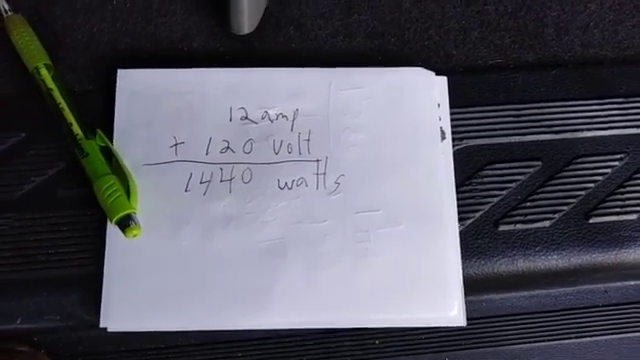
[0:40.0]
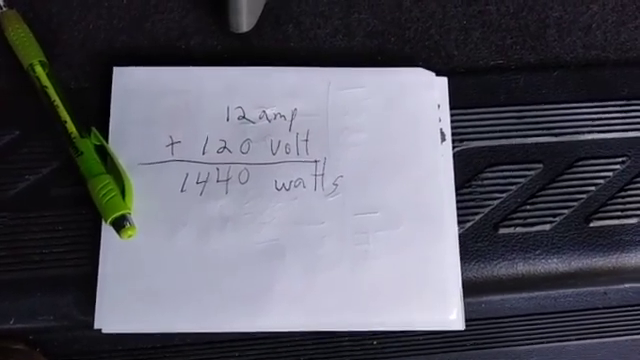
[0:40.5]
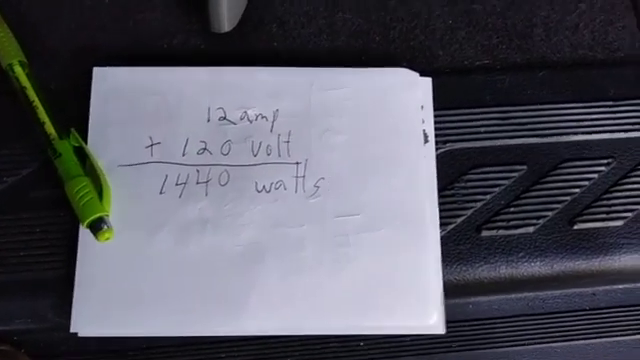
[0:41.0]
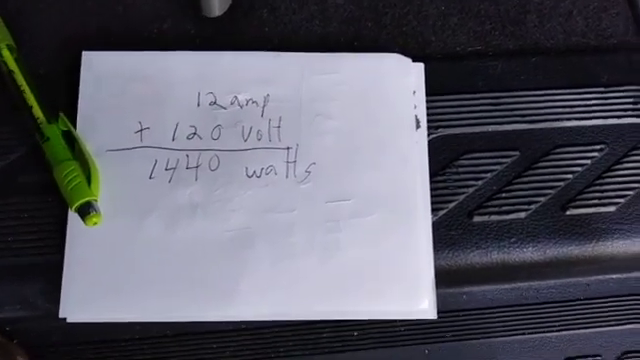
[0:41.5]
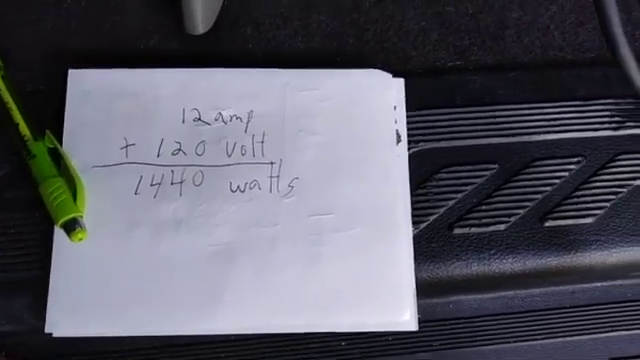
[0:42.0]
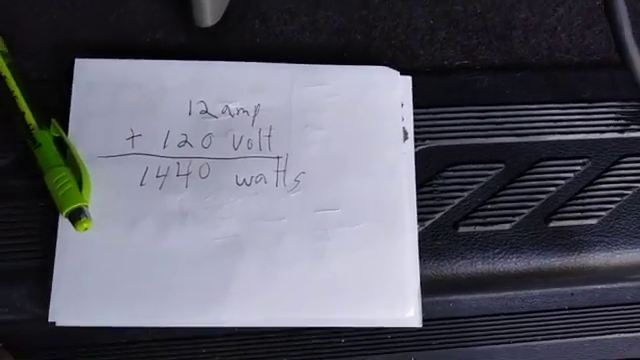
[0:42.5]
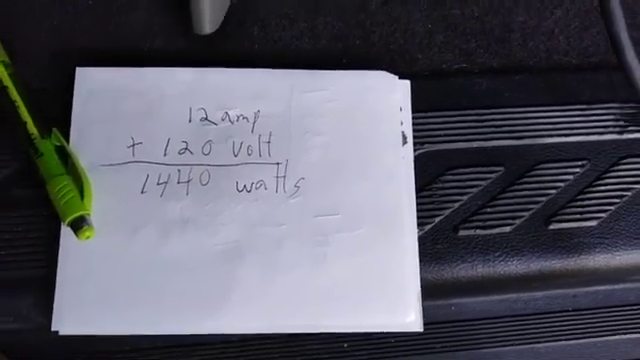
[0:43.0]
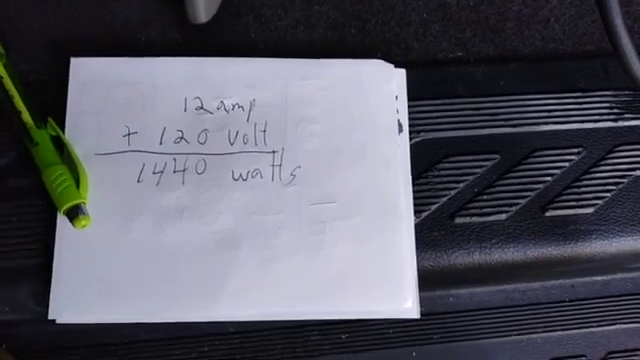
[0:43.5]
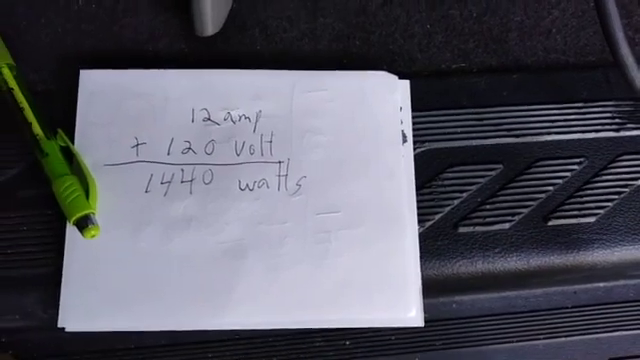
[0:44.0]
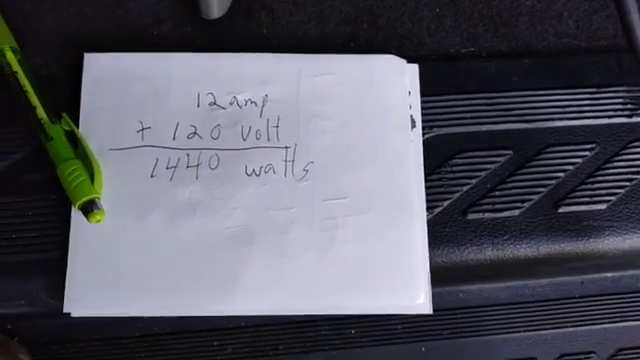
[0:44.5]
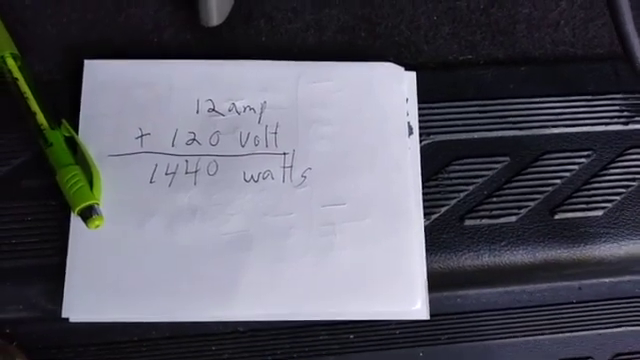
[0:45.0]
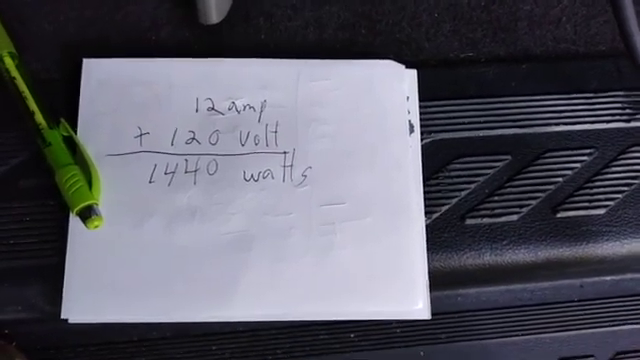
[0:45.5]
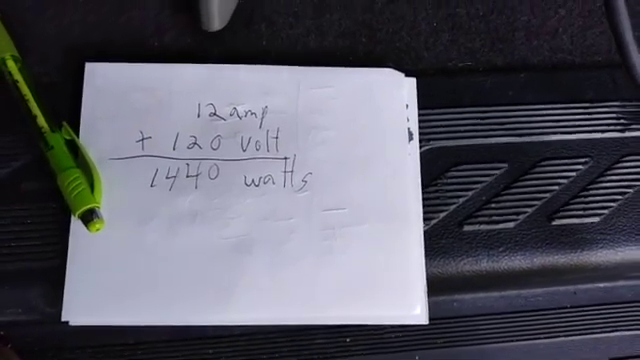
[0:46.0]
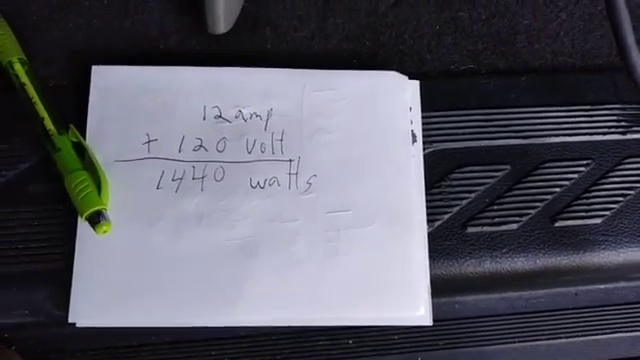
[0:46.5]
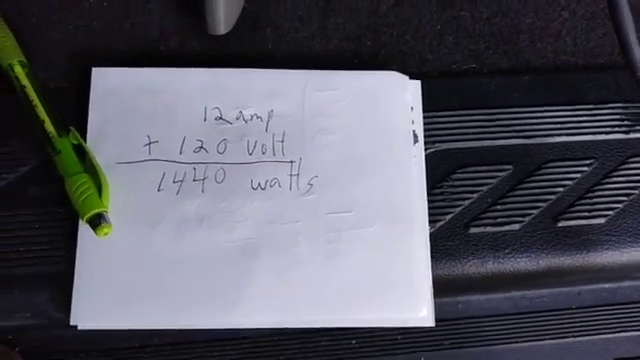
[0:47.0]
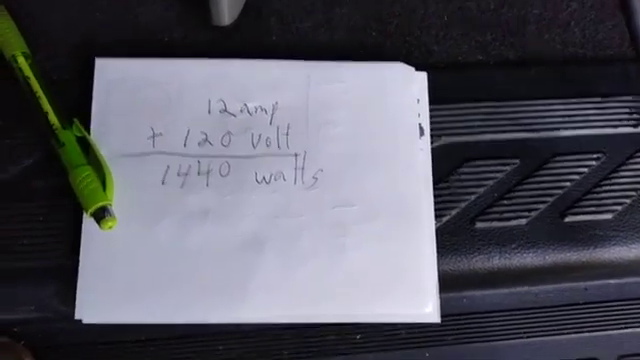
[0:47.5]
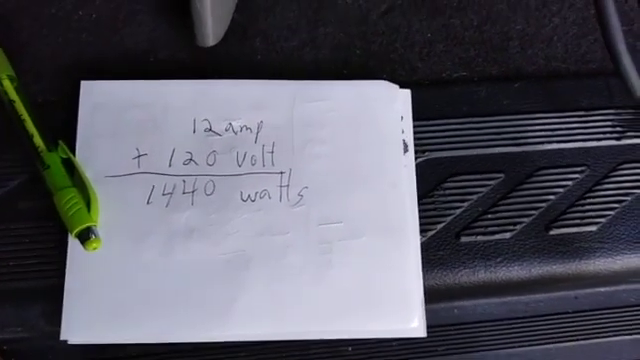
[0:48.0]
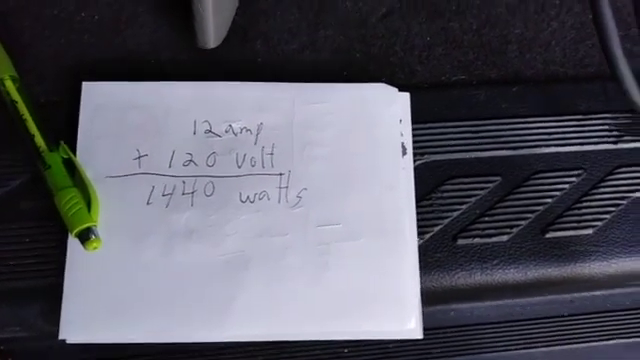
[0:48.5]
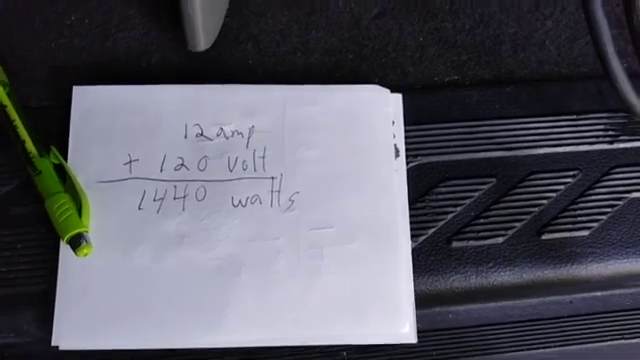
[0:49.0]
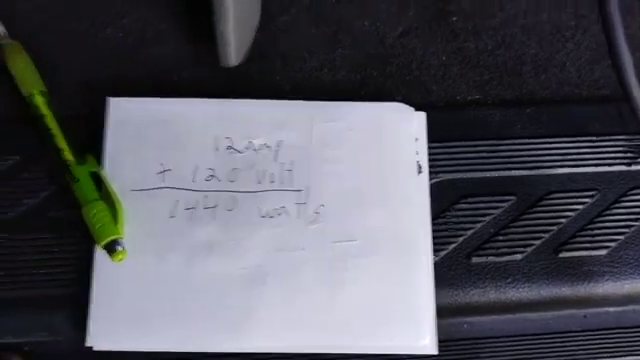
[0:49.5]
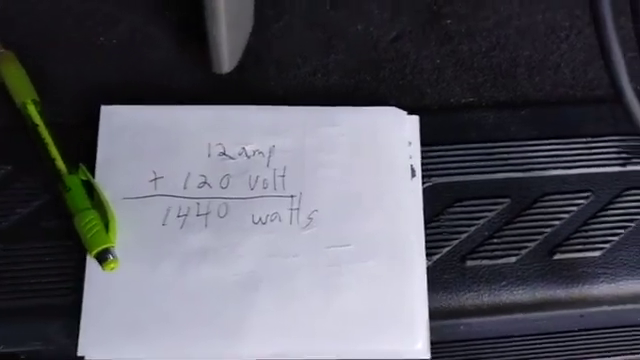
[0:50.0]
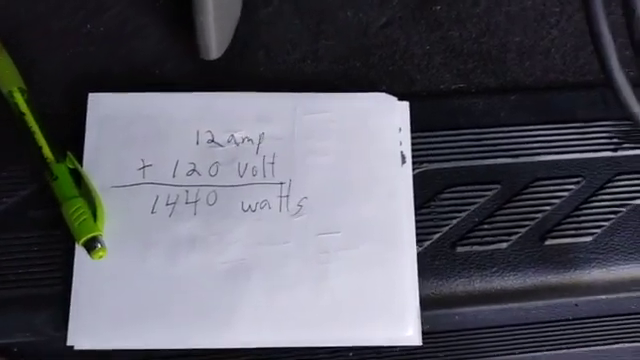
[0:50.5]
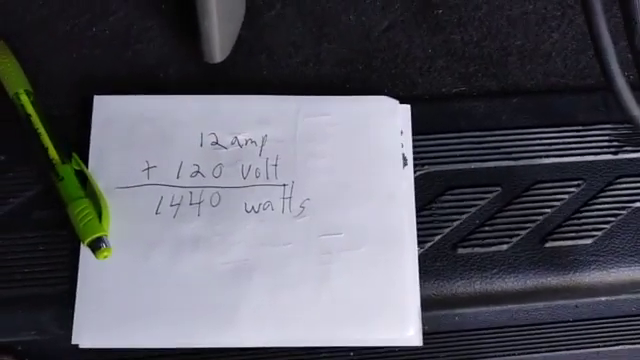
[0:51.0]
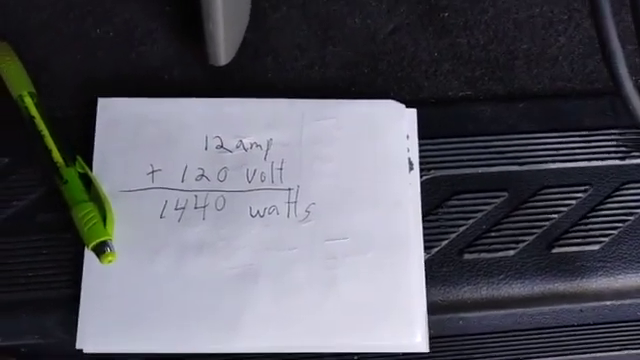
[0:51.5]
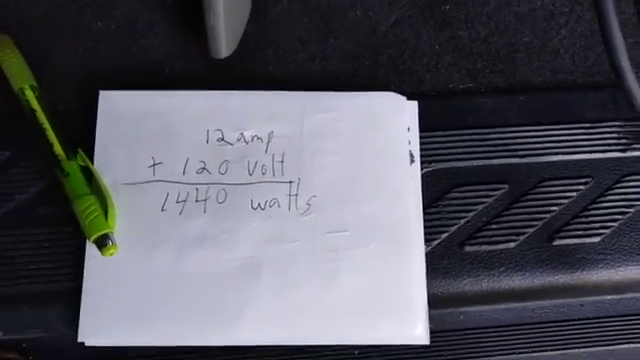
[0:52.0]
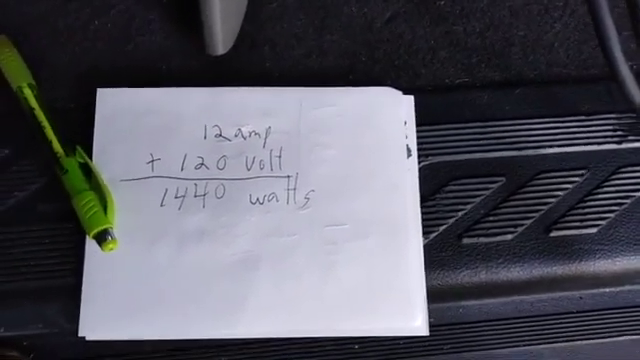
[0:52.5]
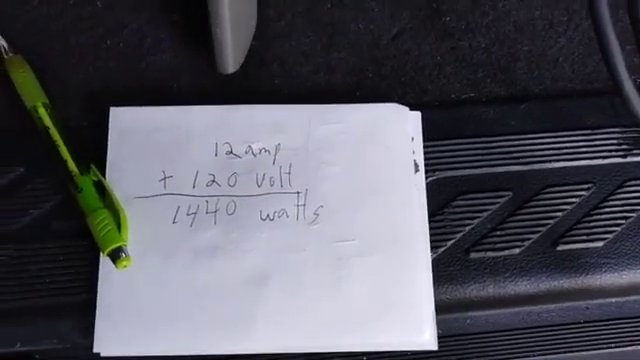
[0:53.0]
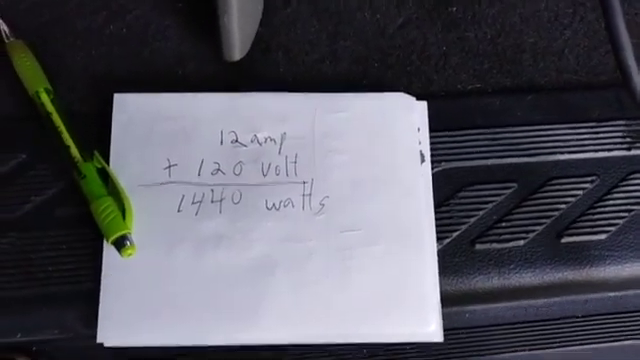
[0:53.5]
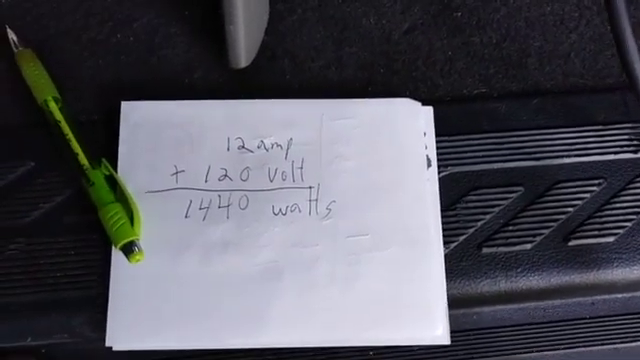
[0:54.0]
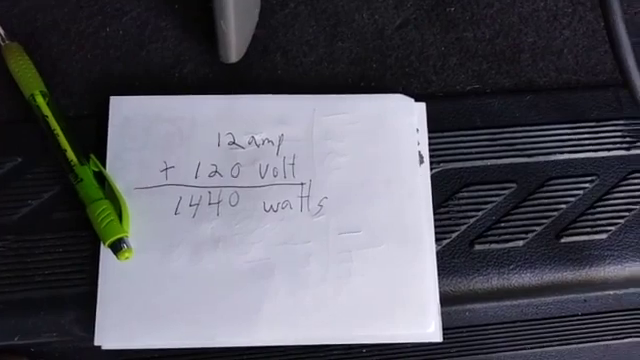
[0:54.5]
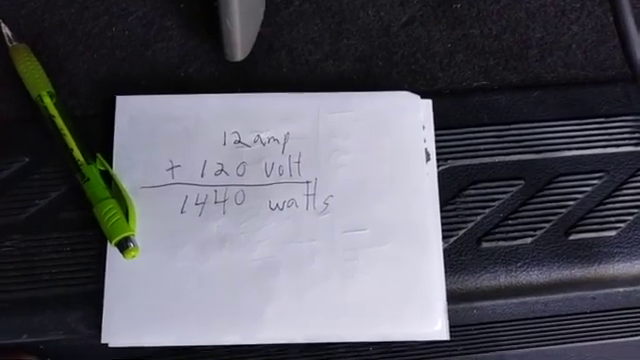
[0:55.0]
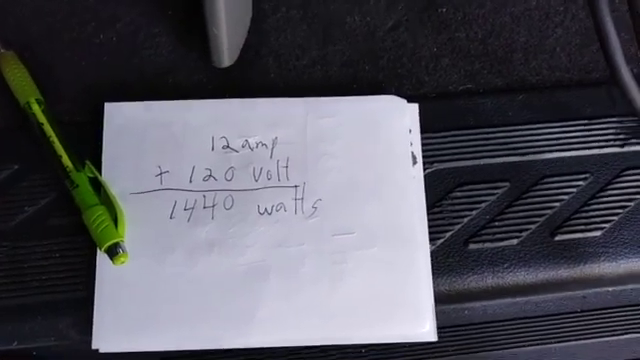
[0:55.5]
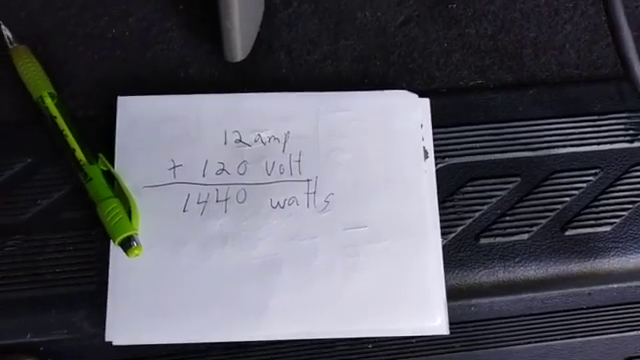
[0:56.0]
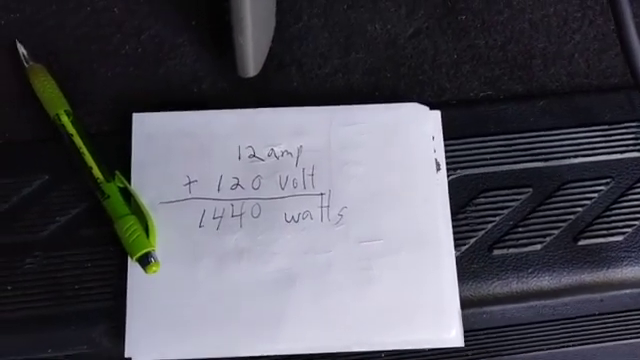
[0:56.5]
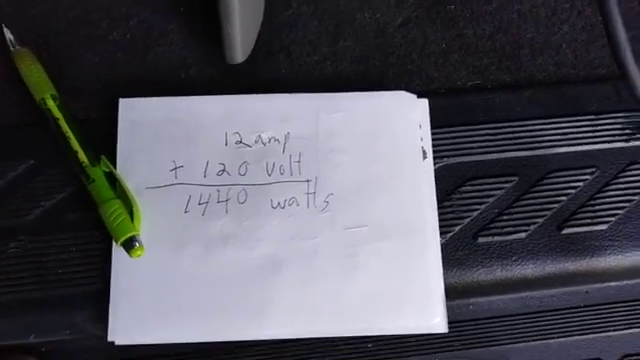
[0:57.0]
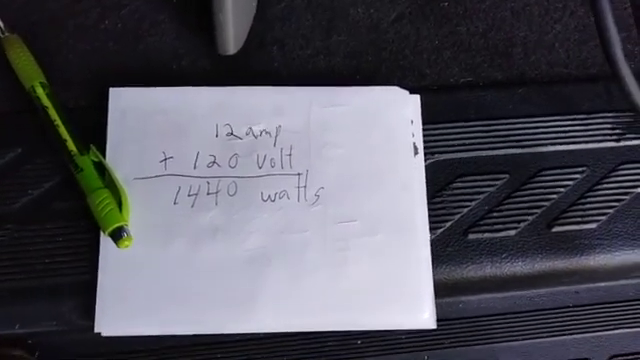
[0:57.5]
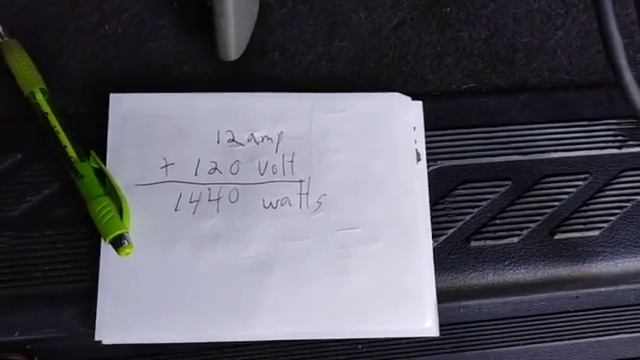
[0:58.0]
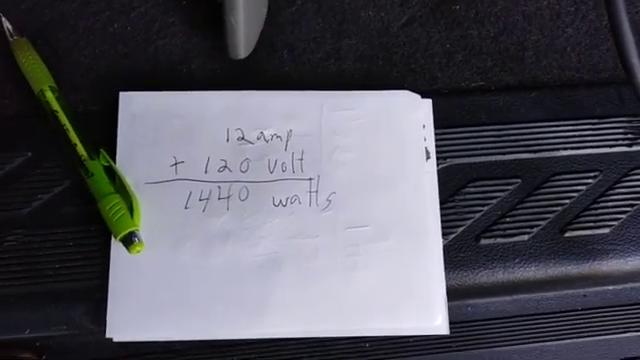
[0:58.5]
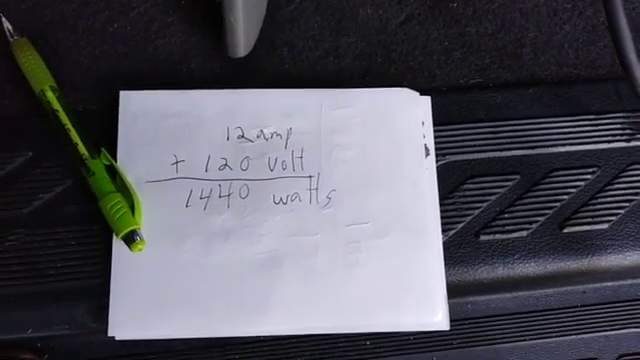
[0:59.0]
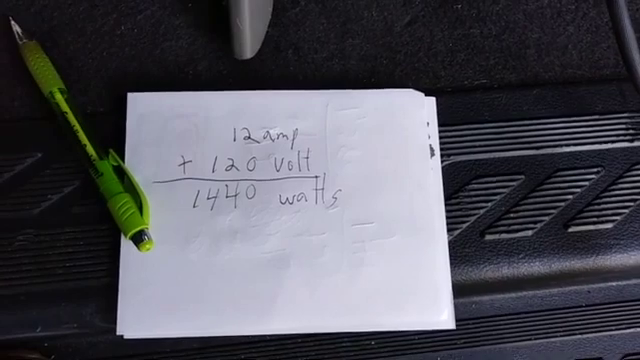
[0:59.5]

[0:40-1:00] The focus remains entirely on the white piece of paper on the van's floorboard. It looks slightly larger than a Post-it note and appears to be a single page folded over; it has no lines and is completely white, possibly from a small note pad. The visible part is square. At the top it reads "12 amp", below that "+ 120 volt", then a line across just the numbers rather than the whole paper, and below that "1440 watts". Nothing else is on the sheet, though small indentations suggest there might be writing on the other side. The greenish-yellow pen lies horizontally, with the clicker and small handle touching the paper and the rest lying on the floorboard.